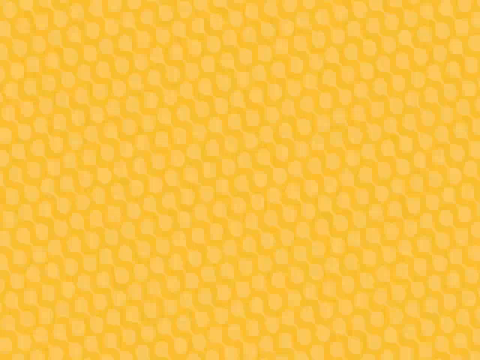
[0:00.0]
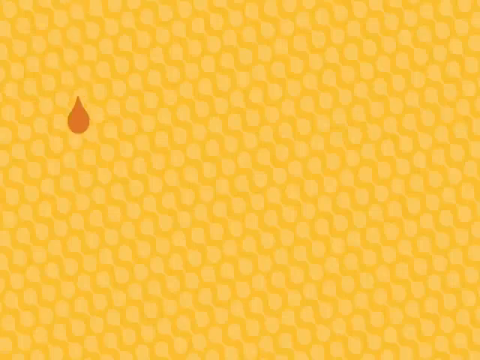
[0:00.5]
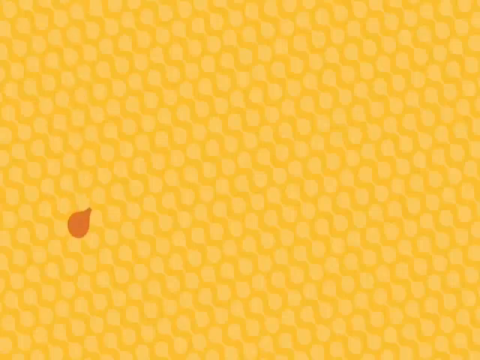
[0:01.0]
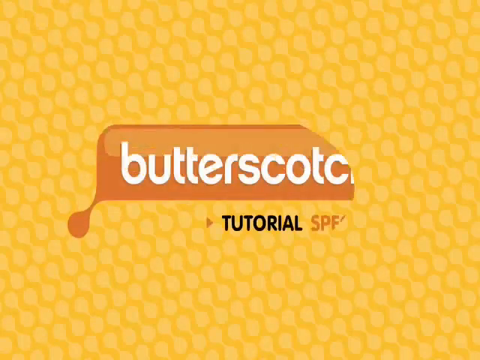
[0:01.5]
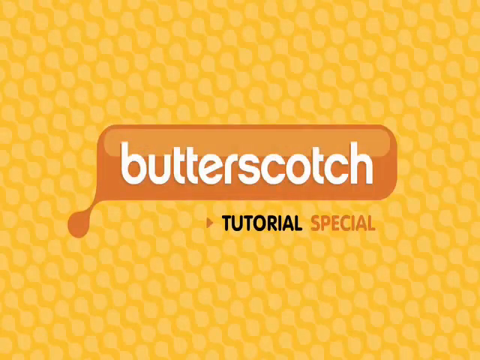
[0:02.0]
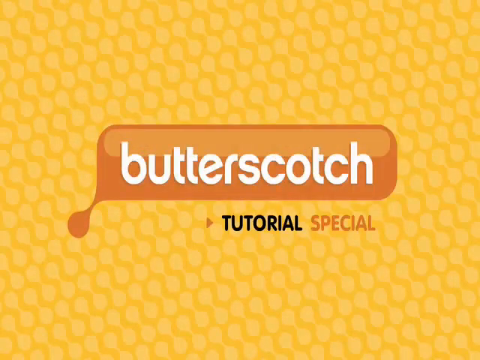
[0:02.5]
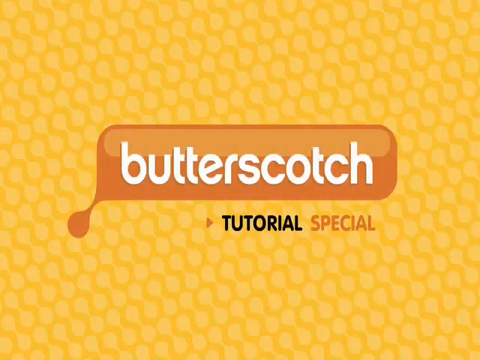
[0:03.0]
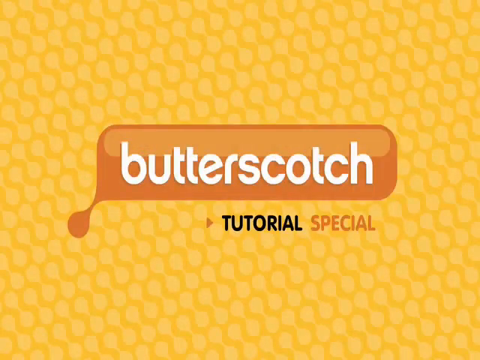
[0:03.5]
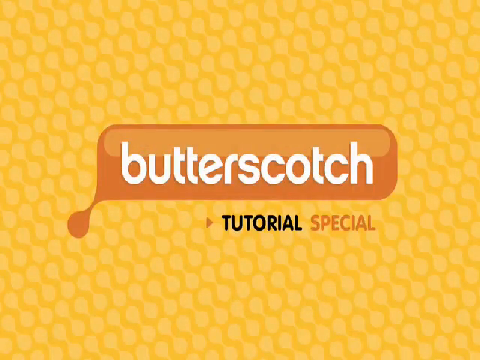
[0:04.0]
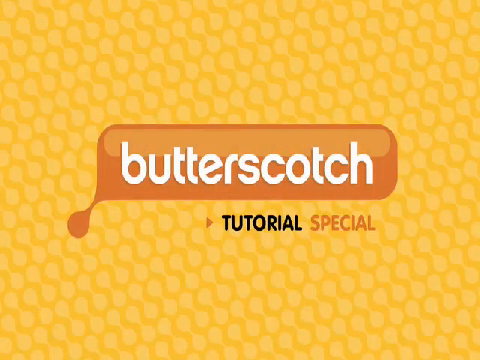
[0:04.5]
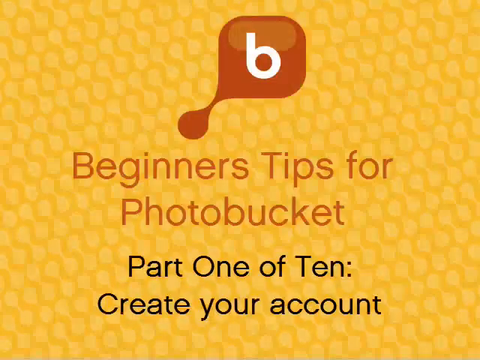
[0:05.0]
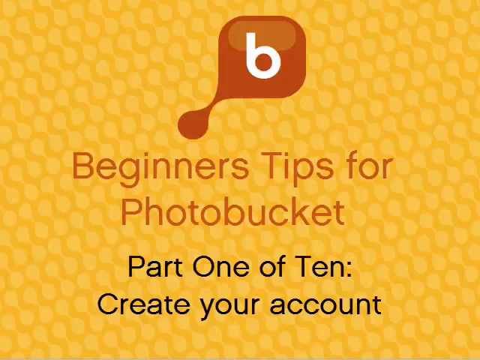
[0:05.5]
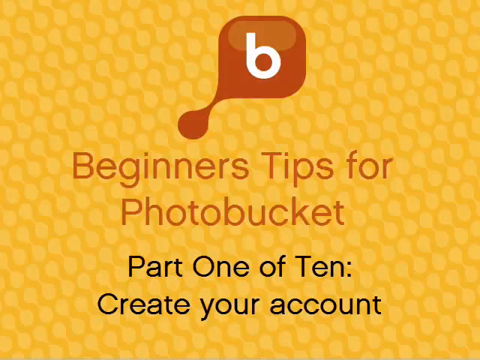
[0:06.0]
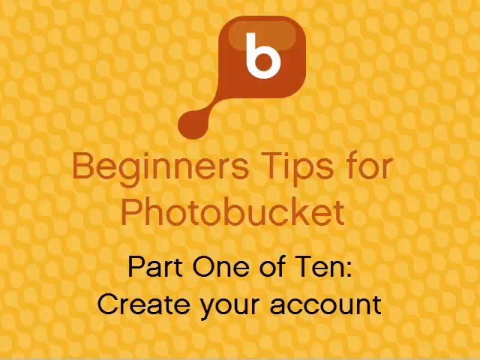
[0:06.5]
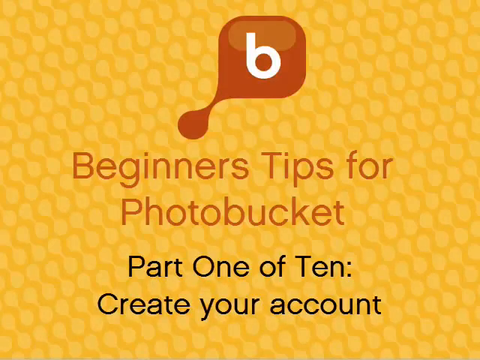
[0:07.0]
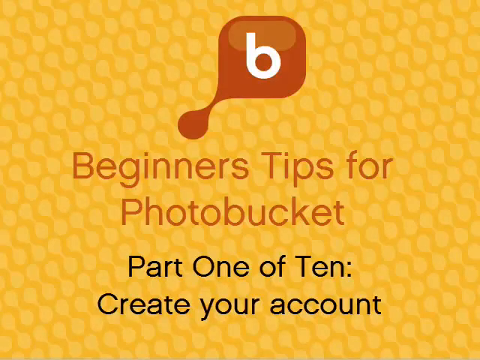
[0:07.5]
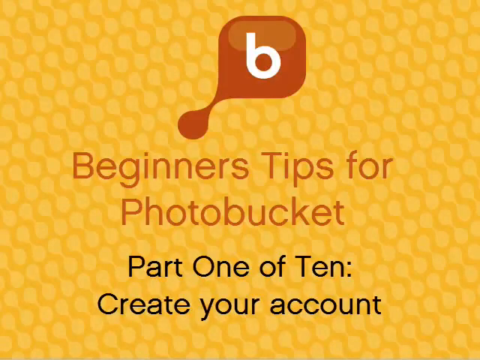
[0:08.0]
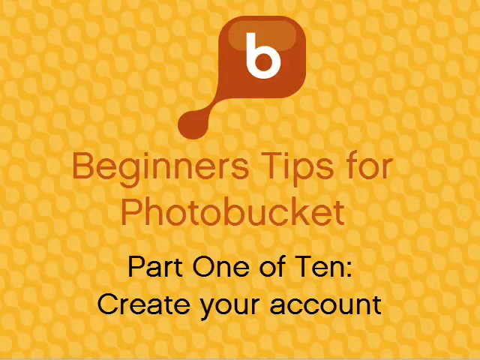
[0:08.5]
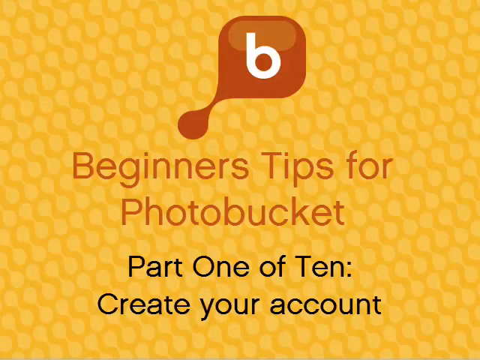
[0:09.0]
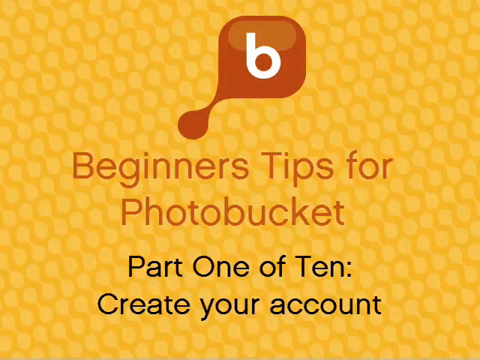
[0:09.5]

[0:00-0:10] A yellow honeycomb-textured background appears, and a blue banner pops up with white text reading "Butterscotch," followed by more black and brown text that says "tutorial special." The scene transitions to a yellow, kind of honeycomb background with a brown banner bearing white text that shows a bee, along with brown text reading "beginners tips for photobucket" and black text beneath it reading "part one of ten create your account." The video then begins to transition to another screen.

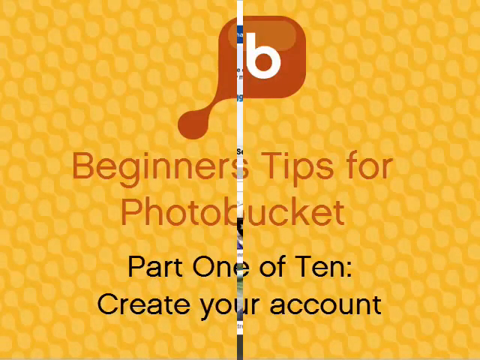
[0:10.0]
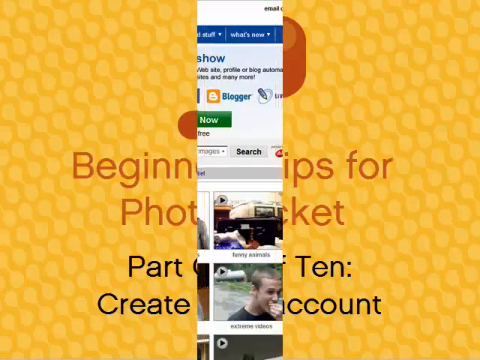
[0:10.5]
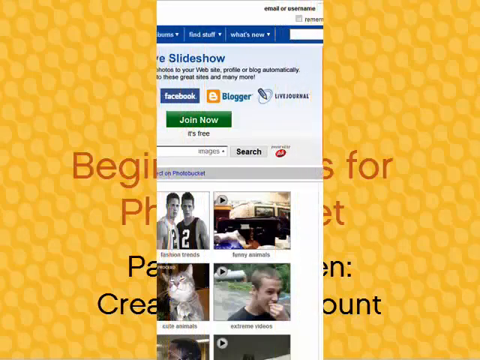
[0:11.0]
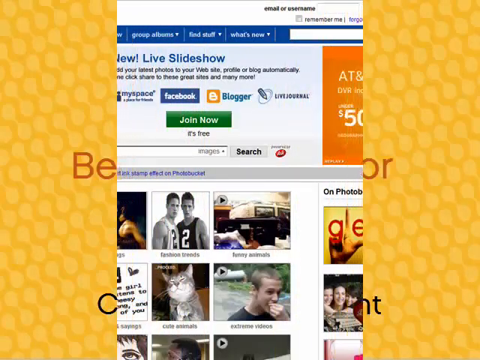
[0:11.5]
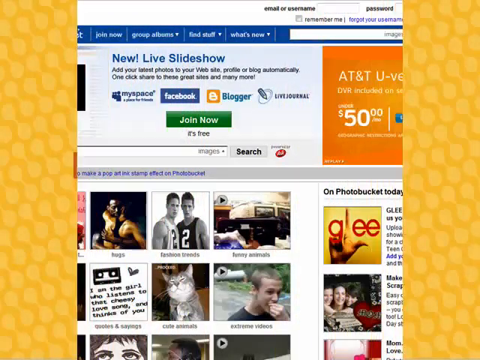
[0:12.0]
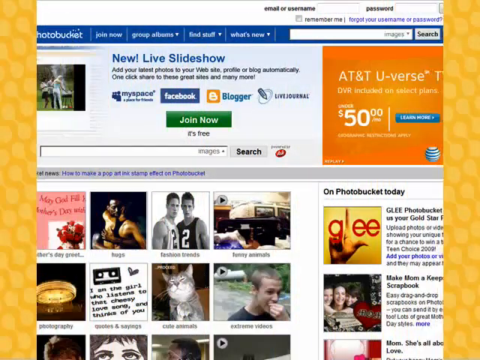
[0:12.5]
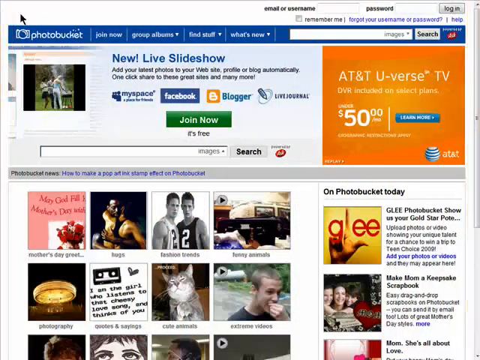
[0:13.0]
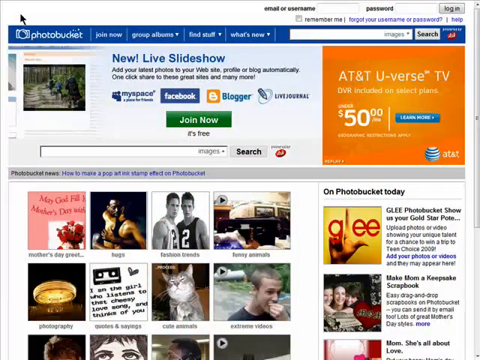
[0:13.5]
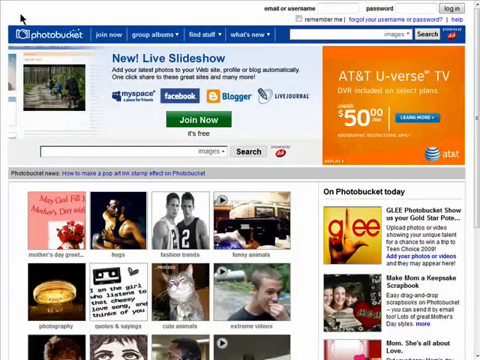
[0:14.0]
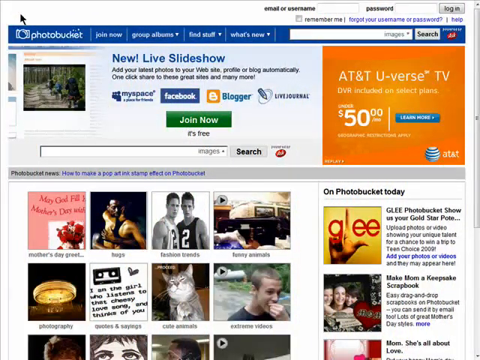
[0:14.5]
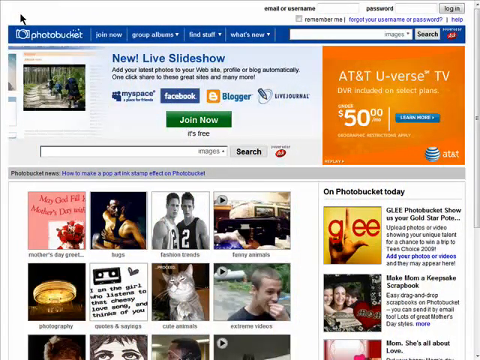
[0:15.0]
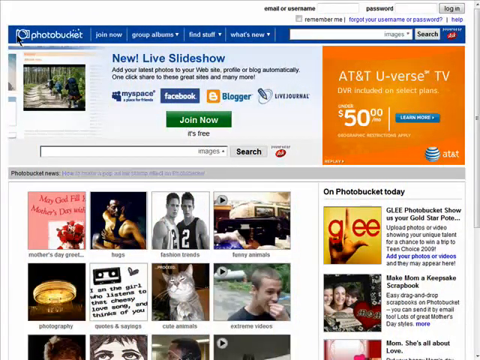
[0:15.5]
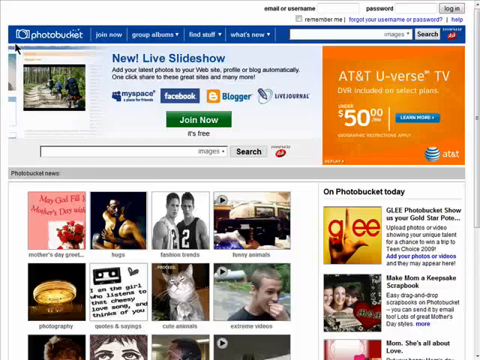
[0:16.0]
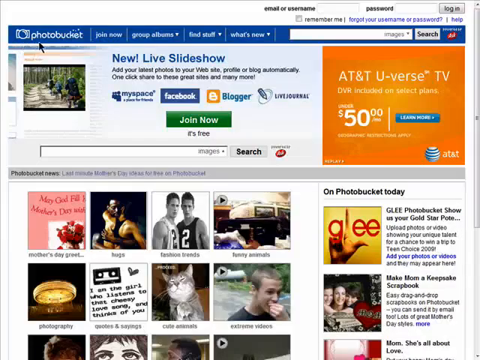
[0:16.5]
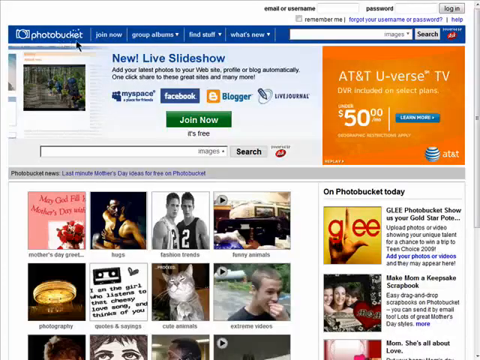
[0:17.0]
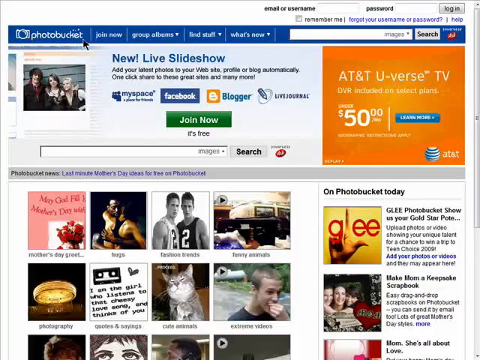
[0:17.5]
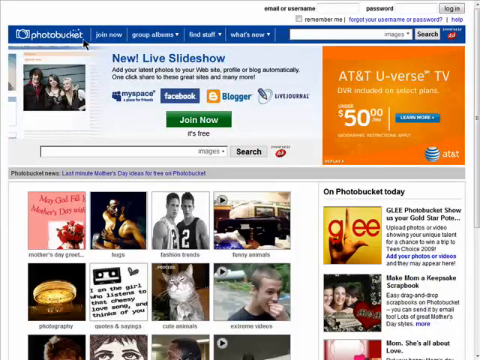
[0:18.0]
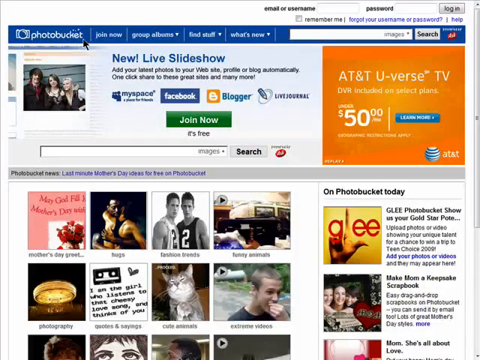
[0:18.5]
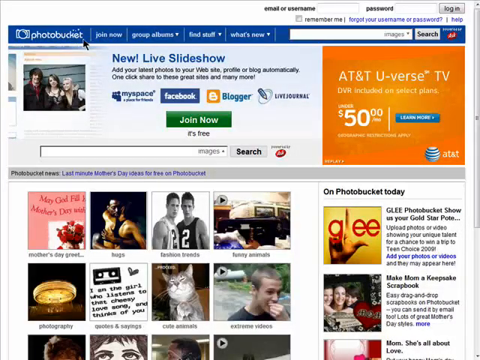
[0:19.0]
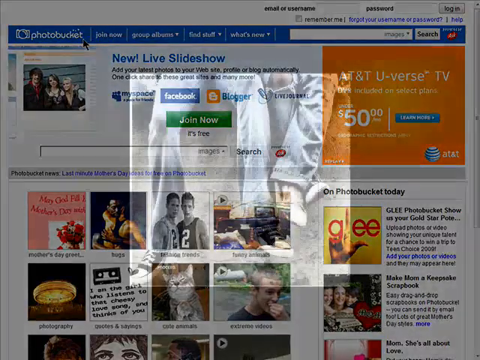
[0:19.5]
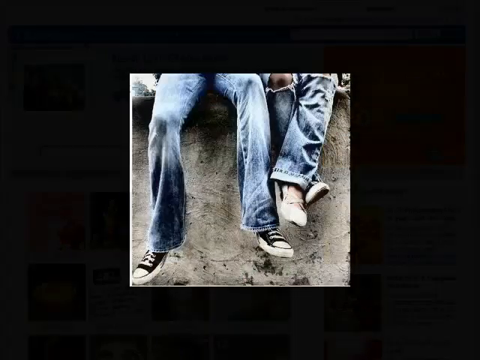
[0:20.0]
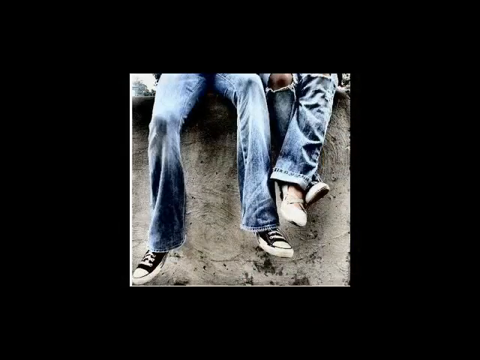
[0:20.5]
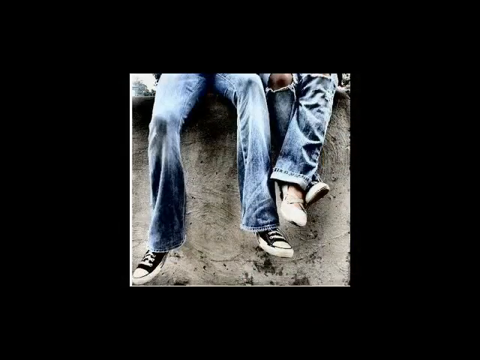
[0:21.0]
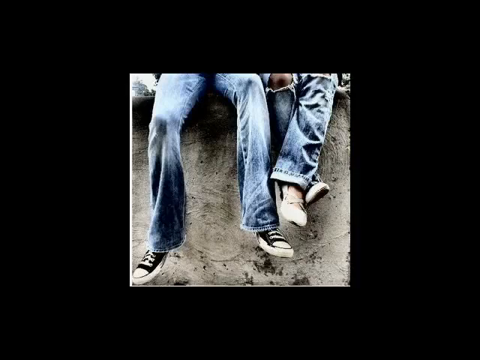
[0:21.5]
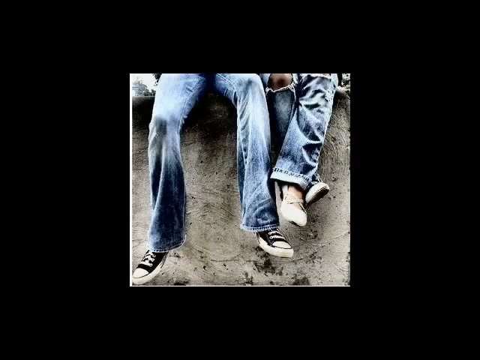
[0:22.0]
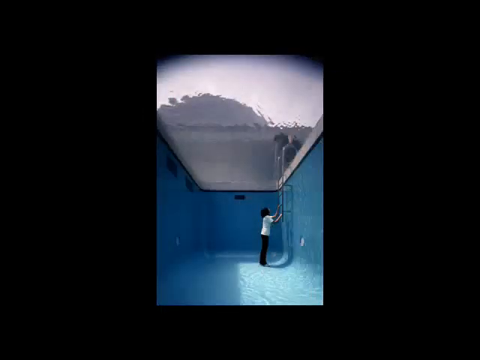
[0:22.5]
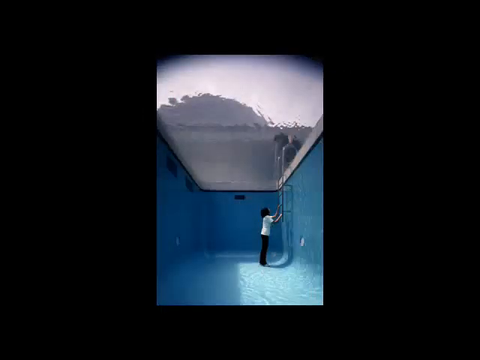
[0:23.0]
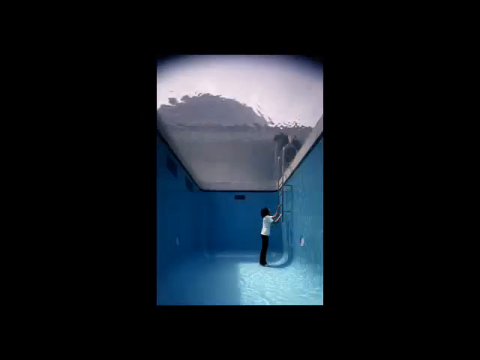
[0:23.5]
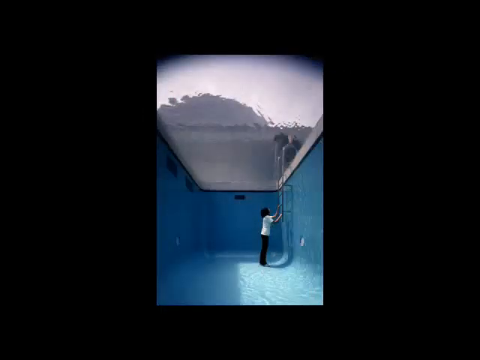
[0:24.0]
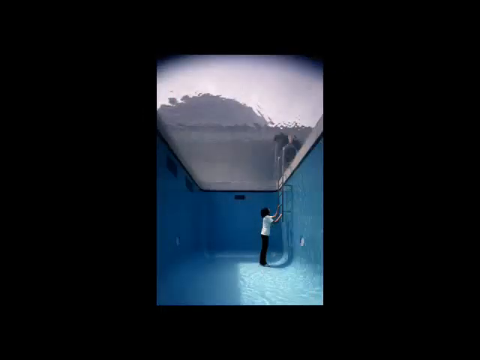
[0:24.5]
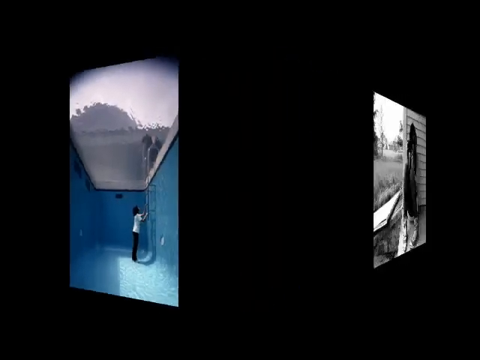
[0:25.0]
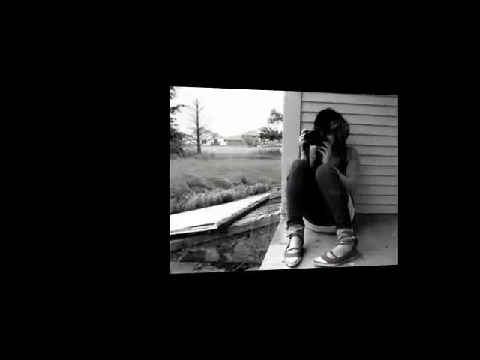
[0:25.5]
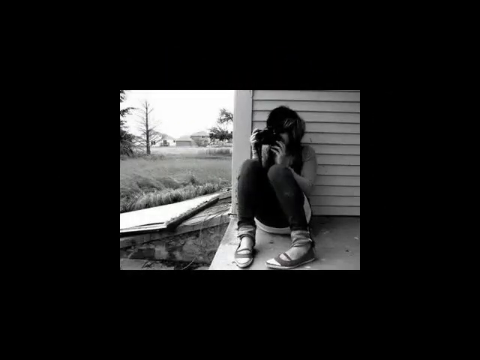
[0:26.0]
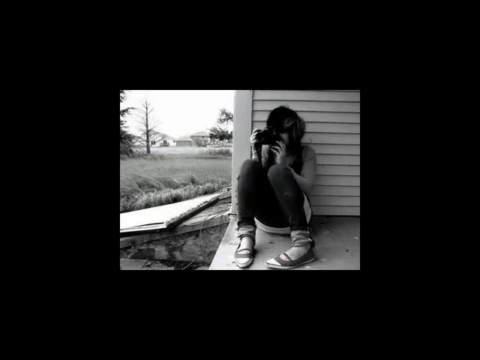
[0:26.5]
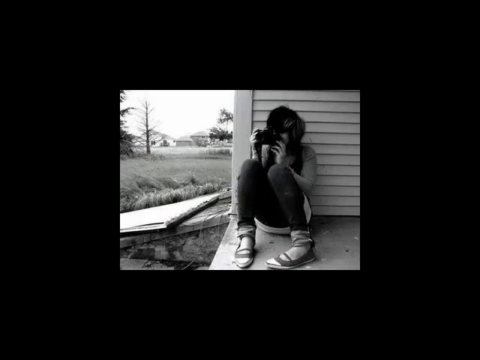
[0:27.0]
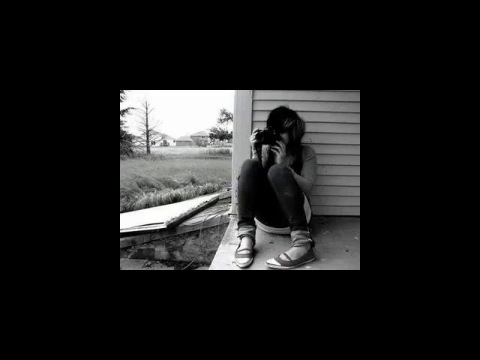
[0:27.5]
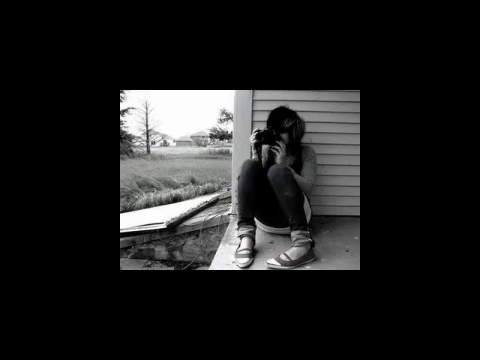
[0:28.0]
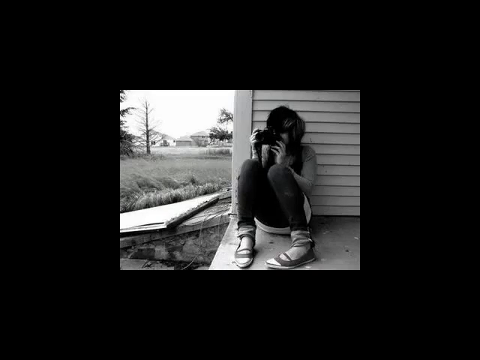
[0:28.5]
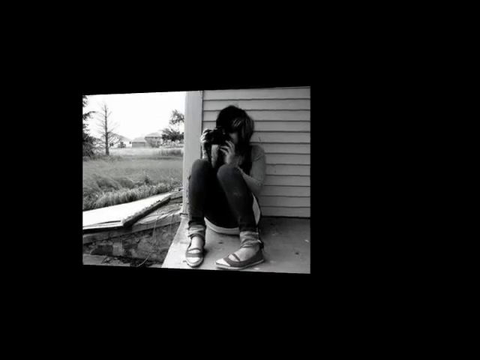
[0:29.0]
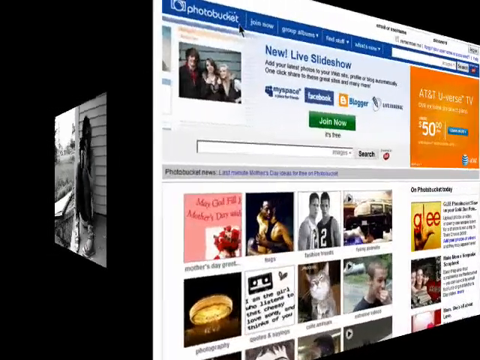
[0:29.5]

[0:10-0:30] The yellow honeycomb background shows a brown box with white text of a bee, brown text reading "Beginner's Tips for Photobucket," and black text reading "Part 1 of 10, Create Your Account." The screen slowly transitions to the Photobucket website, which shows a number of photo options: Mother's Day Greetings, Hugs, Fashion Trends, Funny Animals, Extreme Videos, Cute Animals, Quotes and Sayings, and Photography. A banner at the top reads "New Live Slideshow. Add your latest photos to your website, profile, or blog automatically. One click, share to these great sites and many more," with Myspace, Facebook, Blogger, and LiveJournal listed, and text saying "Join Now, it's free." There is an option to search for images, and next to the Photobucket icon at the top are the options "Join Now," "Group Albums," "Find Stuff," and "What's New." An AT&T U-verse TV advertisement says it is under $50. The mouse moves at the top, and the view goes to a photo of two people sitting on a ledge wearing black and white shoes. Next is a photo of a person in what looks like an empty pool, though it might have water in it, with their hands on the pool ladder. Then a picture shows an emo girl sitting up against a white house with a black camera, before the view returns to the Photobucket website.